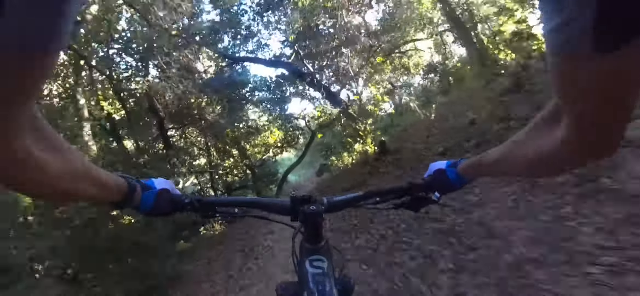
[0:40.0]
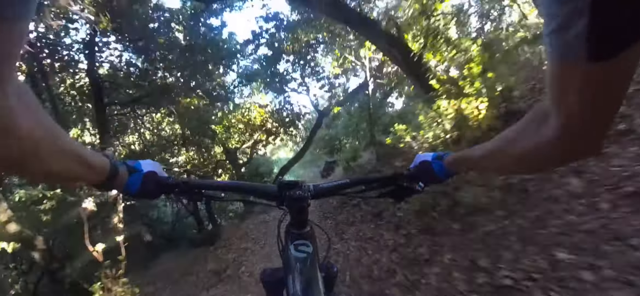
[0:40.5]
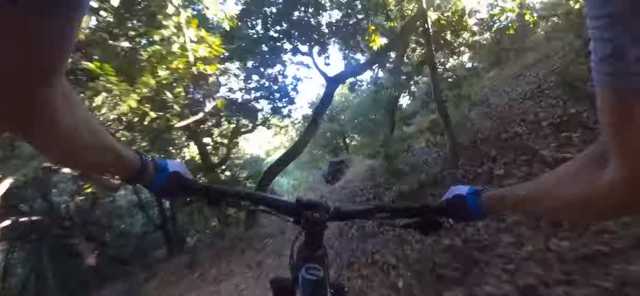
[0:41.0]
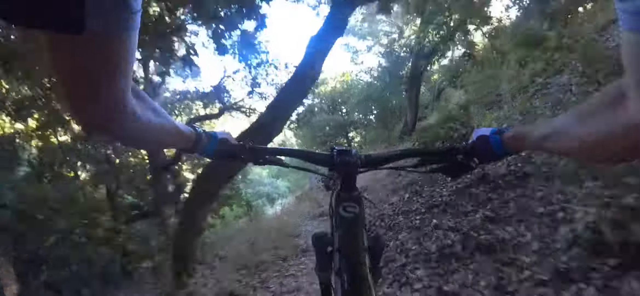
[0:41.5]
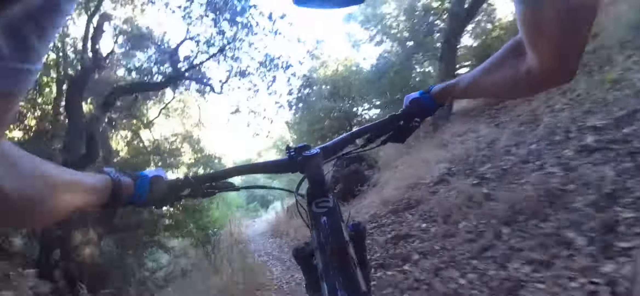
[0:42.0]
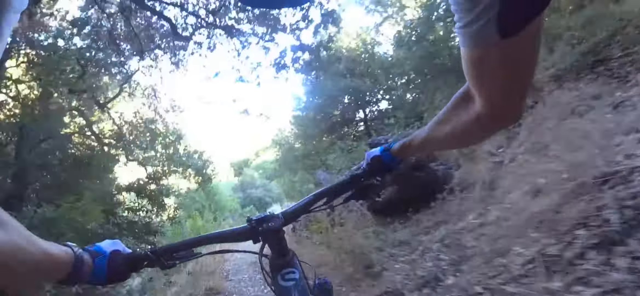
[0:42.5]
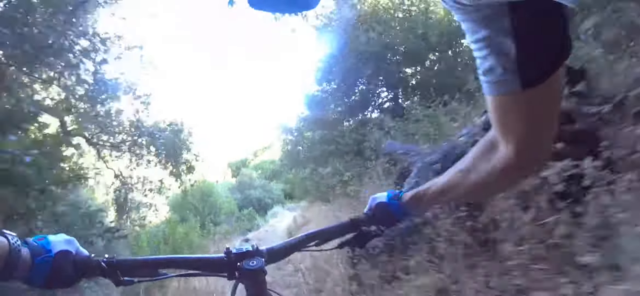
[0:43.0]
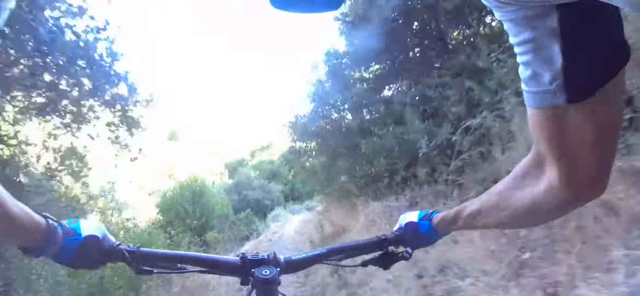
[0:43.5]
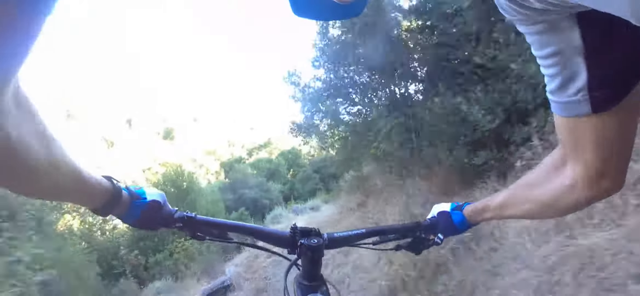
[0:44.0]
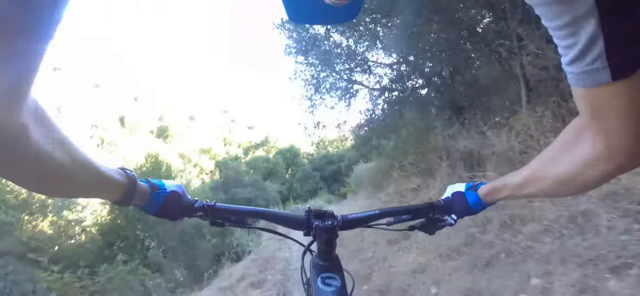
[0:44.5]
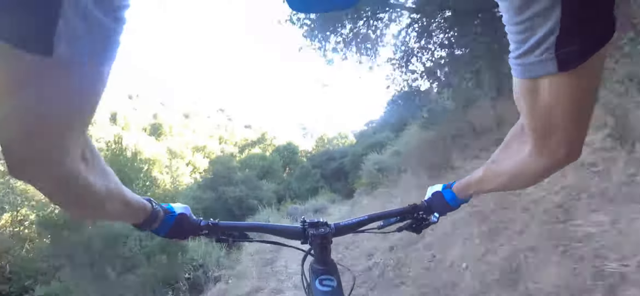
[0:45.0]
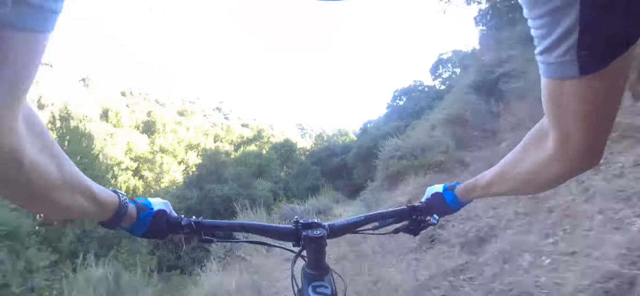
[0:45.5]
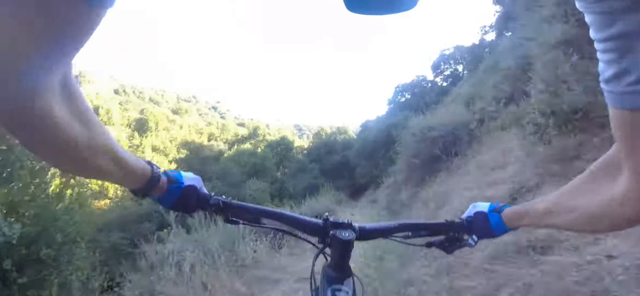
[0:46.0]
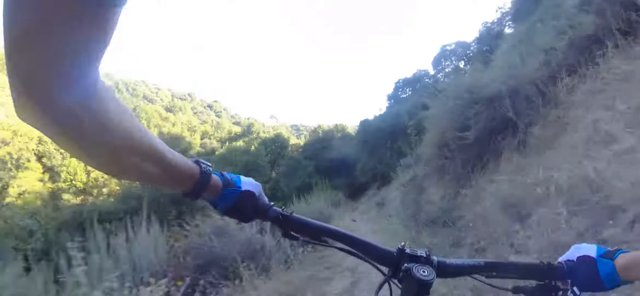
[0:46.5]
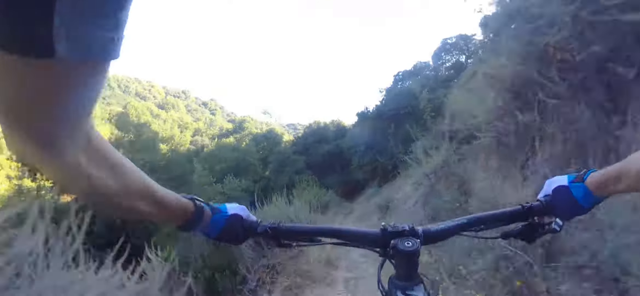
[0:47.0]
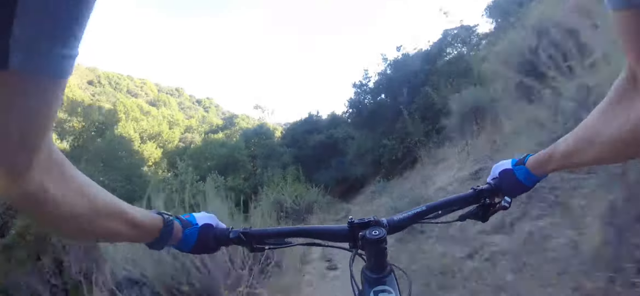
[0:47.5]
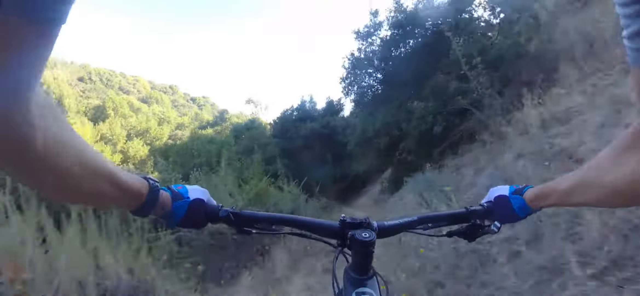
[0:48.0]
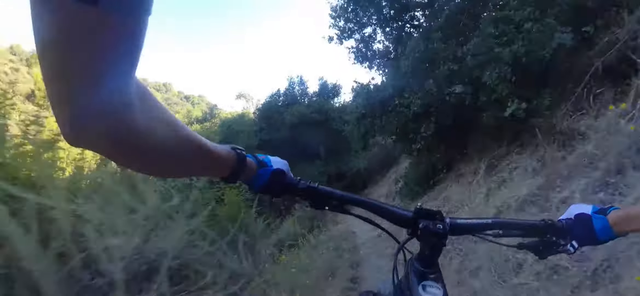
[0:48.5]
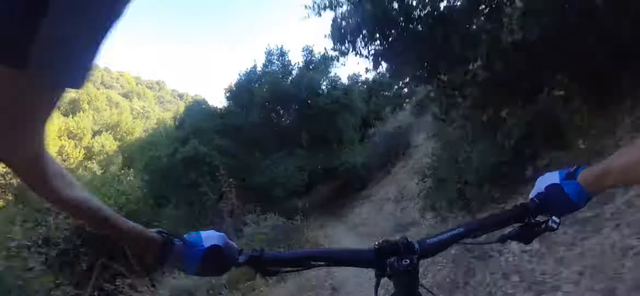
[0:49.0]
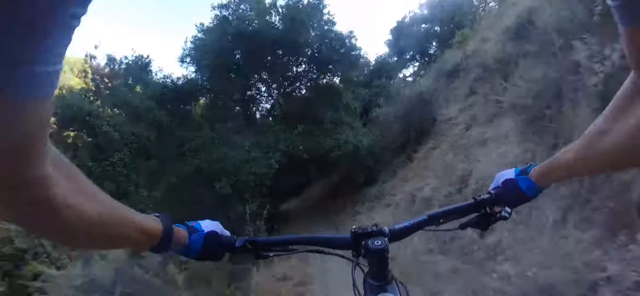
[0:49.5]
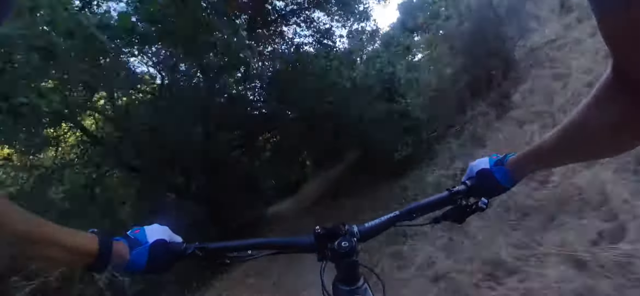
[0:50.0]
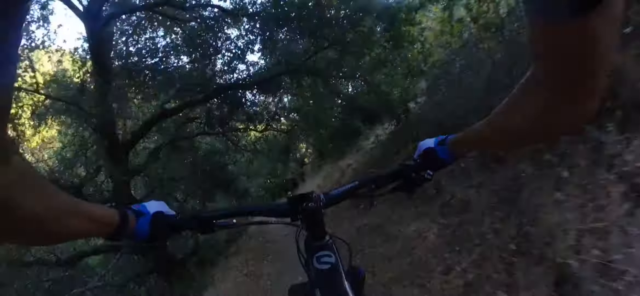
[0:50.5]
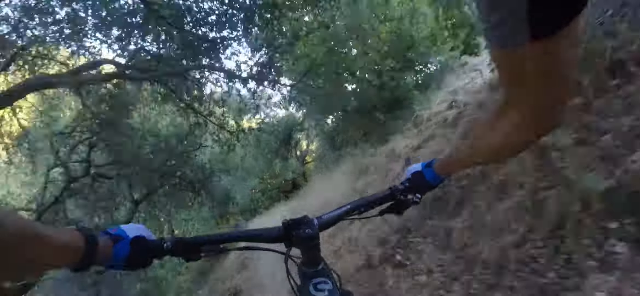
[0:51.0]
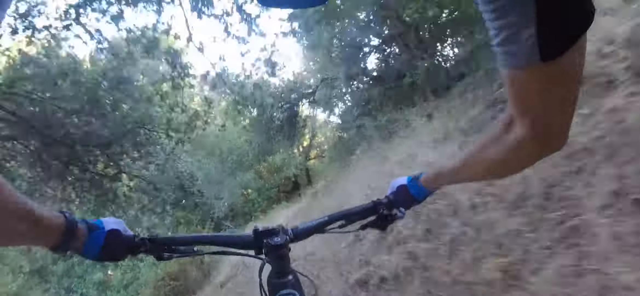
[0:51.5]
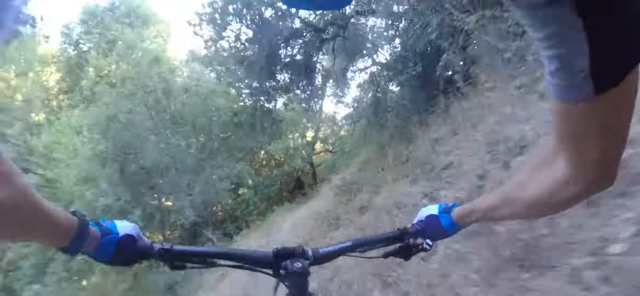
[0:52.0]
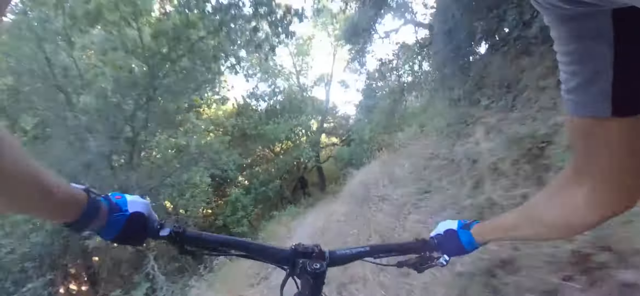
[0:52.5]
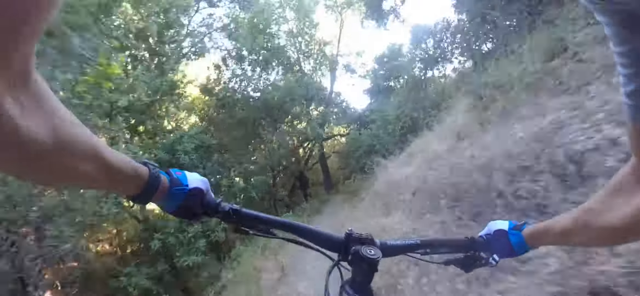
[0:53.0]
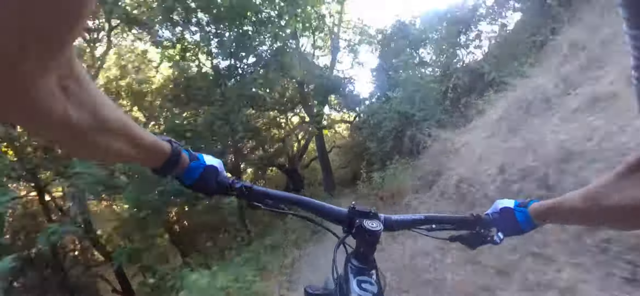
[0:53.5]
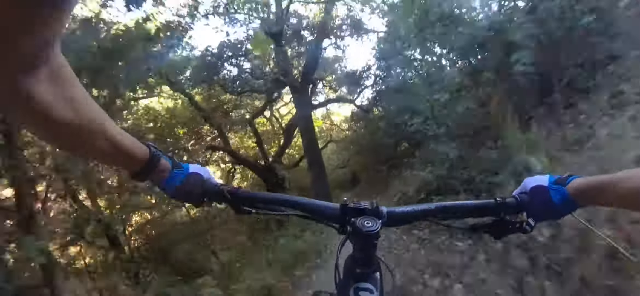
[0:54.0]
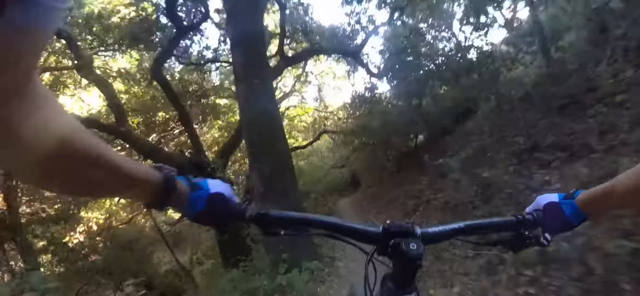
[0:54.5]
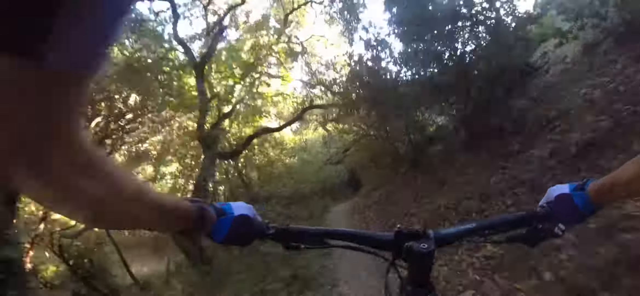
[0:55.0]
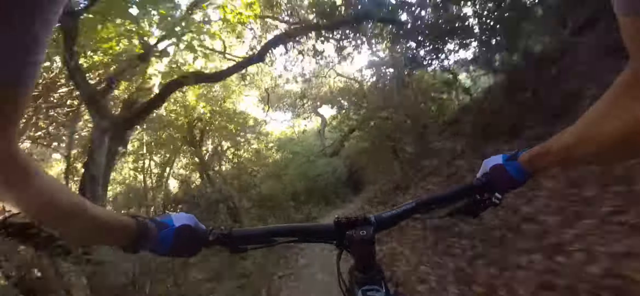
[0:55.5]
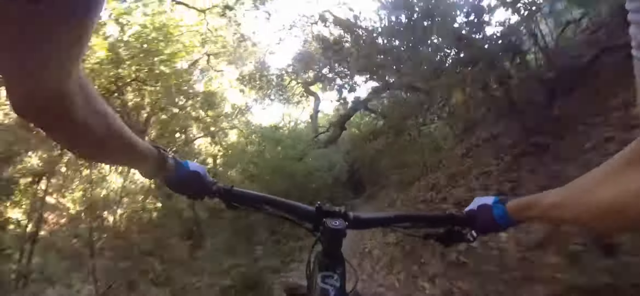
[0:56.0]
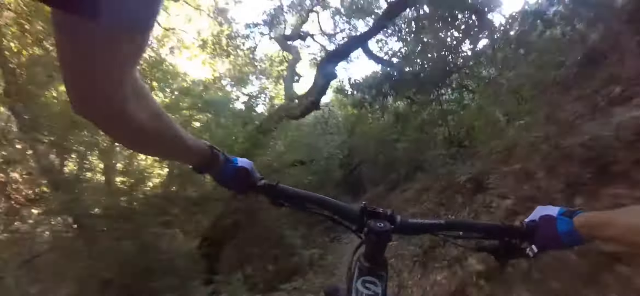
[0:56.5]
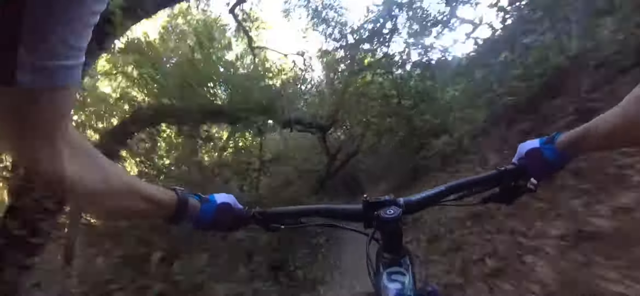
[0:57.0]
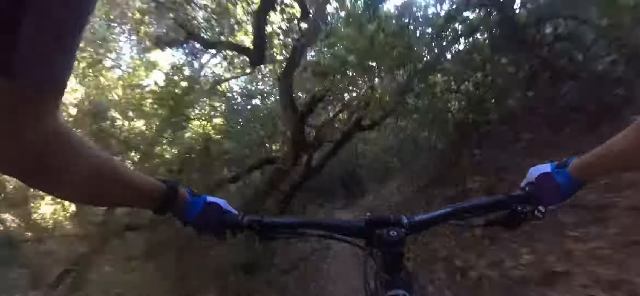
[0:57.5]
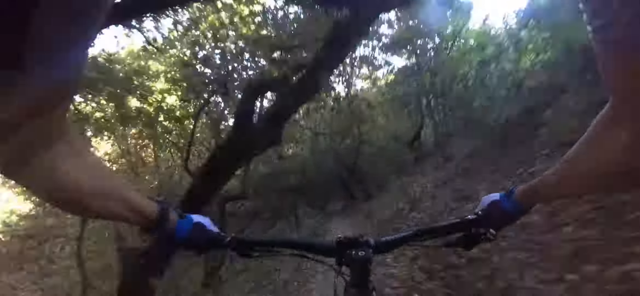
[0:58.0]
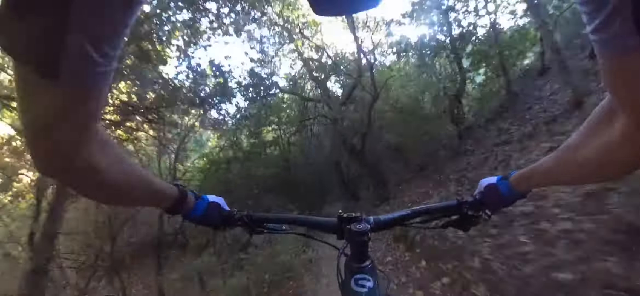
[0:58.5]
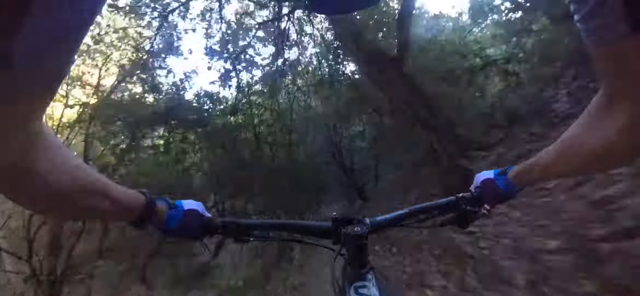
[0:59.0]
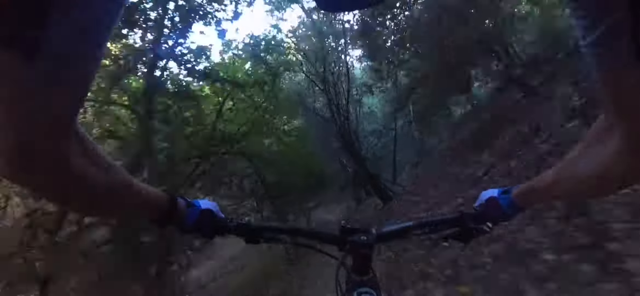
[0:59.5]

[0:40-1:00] A white cyclist wearing gloves in two shades of blue, darker on the back of the hand and lighter around the knuckles, holds onto the handlebar of a black bicycle. His t-shirt is two shades, lighter blue around the bicep and darker blue around the tricep. He rides along a brown dirt path through a forest, passing trees, some just over him and others off in the distance. There is a bit of a clearing where he is sort of in a valley-type area of the forest that opens up, and the sun peers over the tops of the trees. He then enters a darker, far more shaded area along the path. He seems to be riding over branches, rocks and uneven ground.